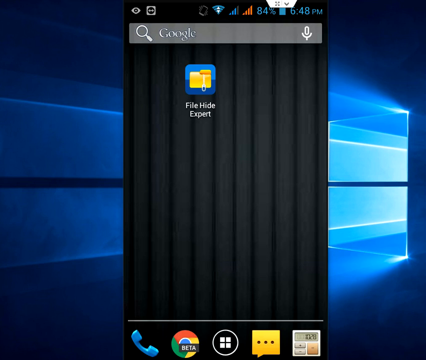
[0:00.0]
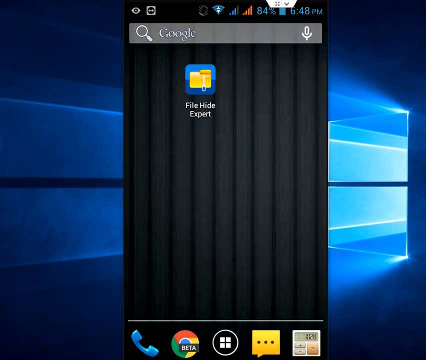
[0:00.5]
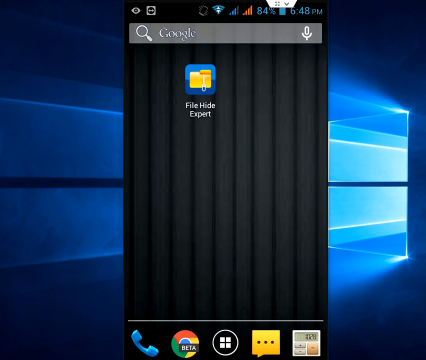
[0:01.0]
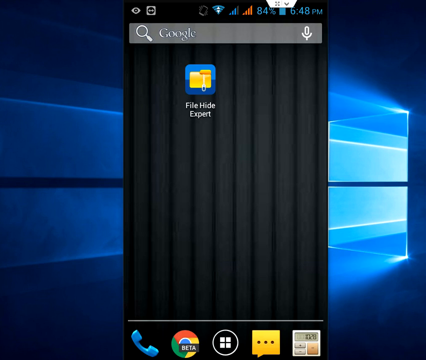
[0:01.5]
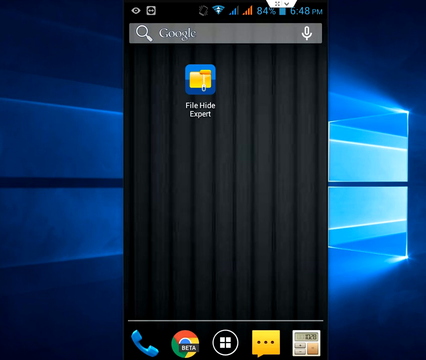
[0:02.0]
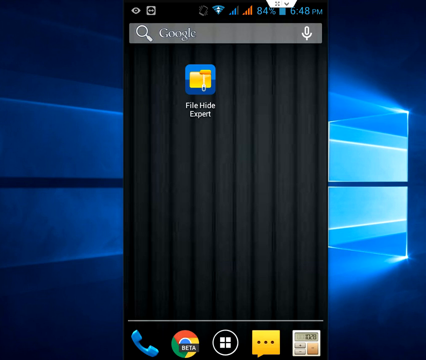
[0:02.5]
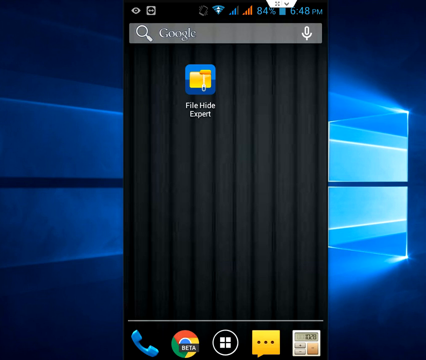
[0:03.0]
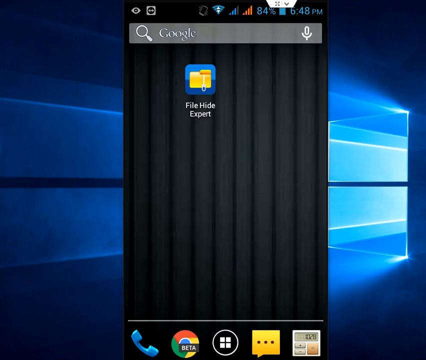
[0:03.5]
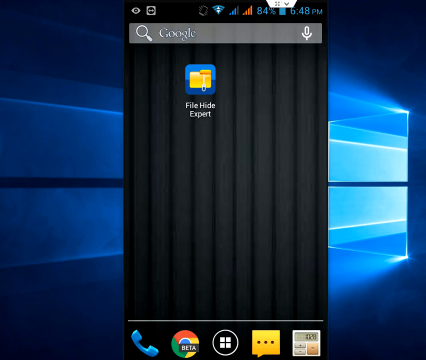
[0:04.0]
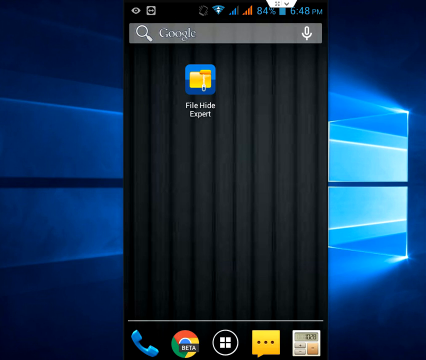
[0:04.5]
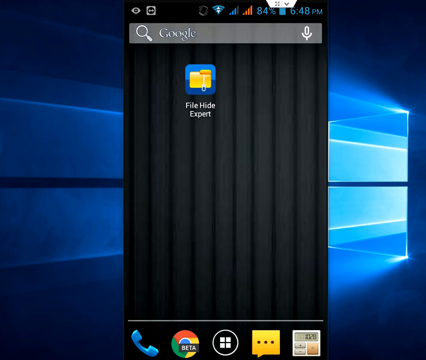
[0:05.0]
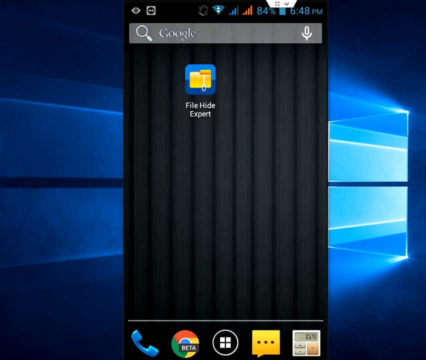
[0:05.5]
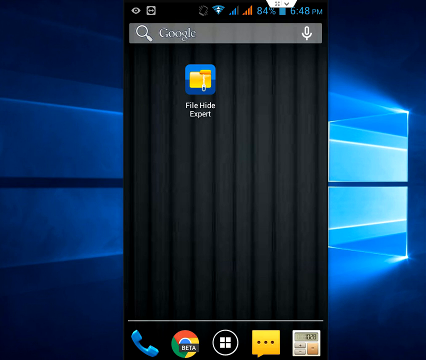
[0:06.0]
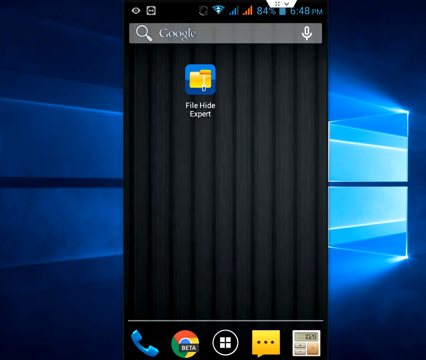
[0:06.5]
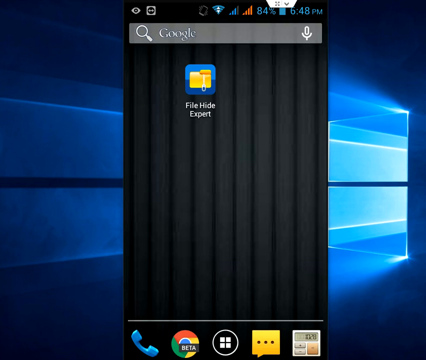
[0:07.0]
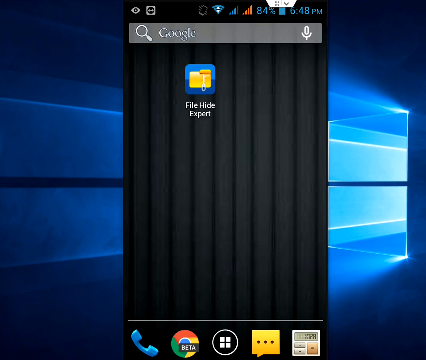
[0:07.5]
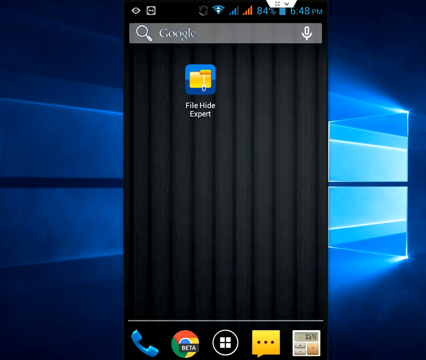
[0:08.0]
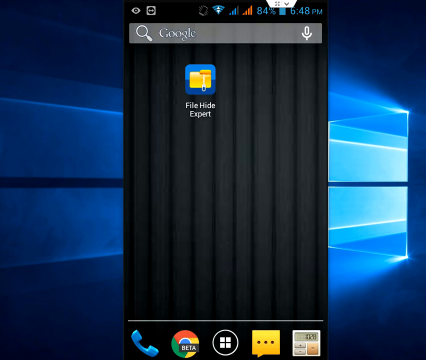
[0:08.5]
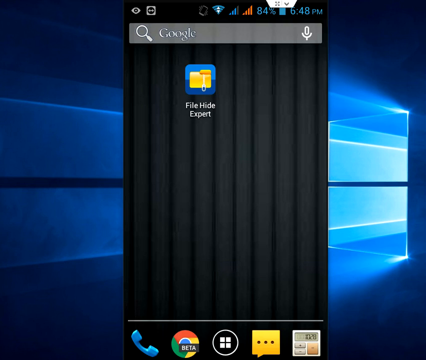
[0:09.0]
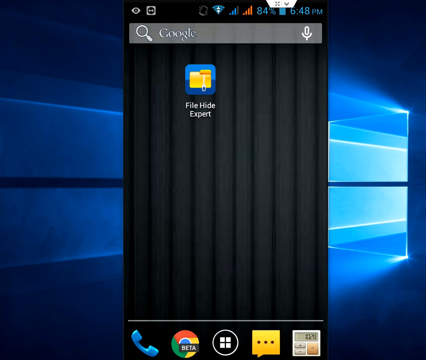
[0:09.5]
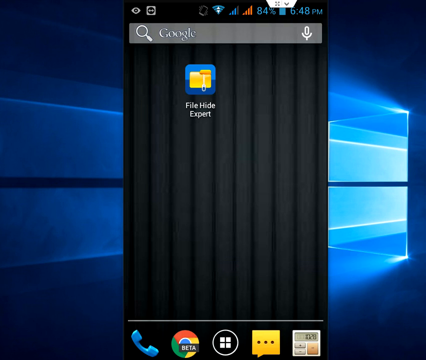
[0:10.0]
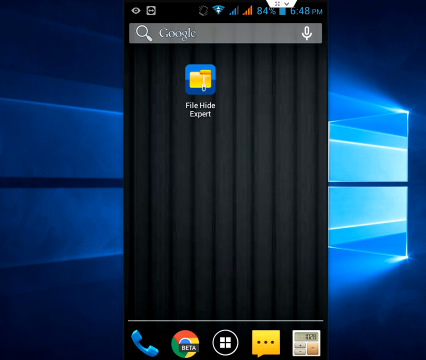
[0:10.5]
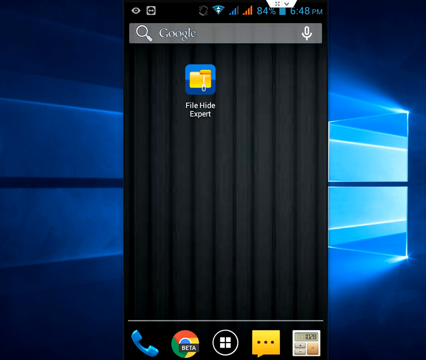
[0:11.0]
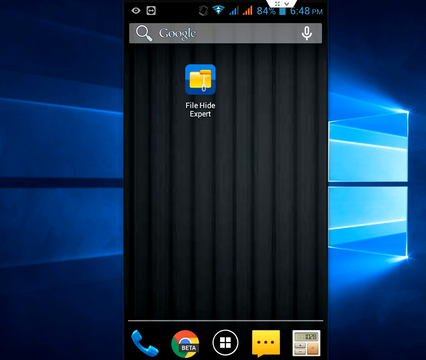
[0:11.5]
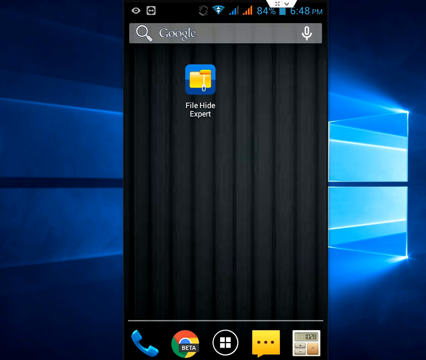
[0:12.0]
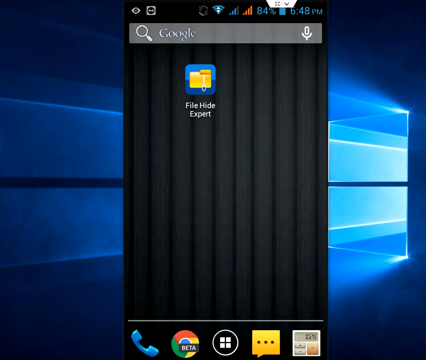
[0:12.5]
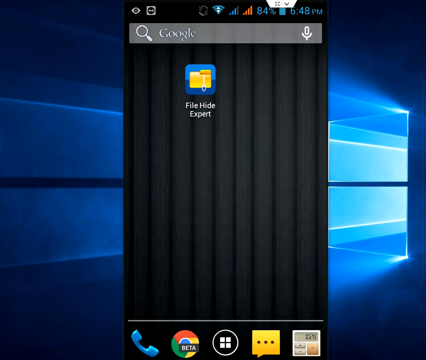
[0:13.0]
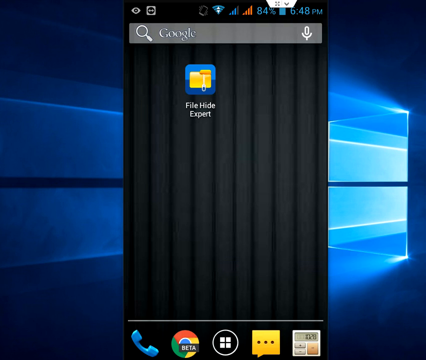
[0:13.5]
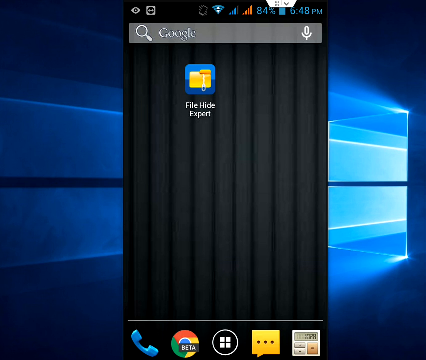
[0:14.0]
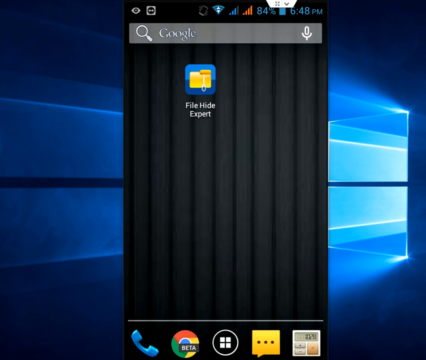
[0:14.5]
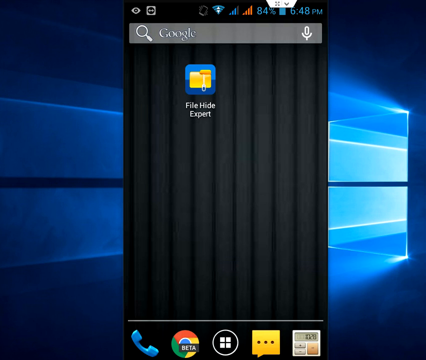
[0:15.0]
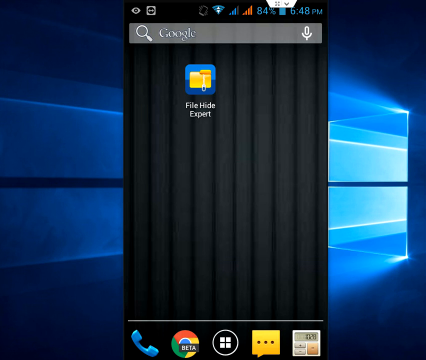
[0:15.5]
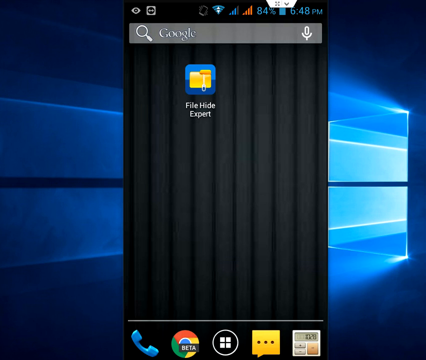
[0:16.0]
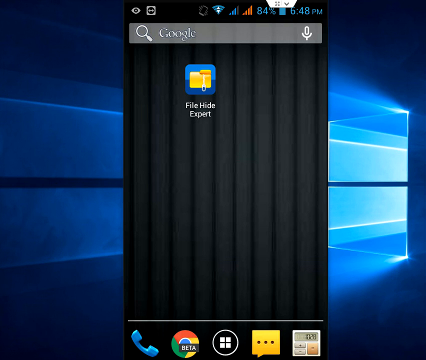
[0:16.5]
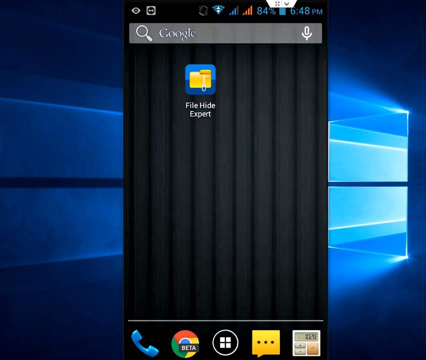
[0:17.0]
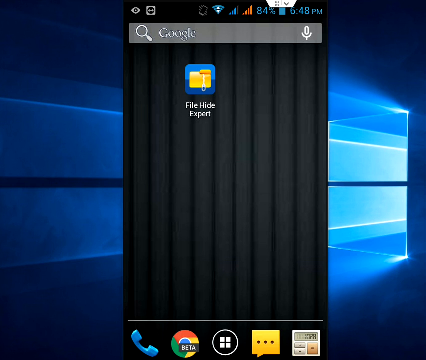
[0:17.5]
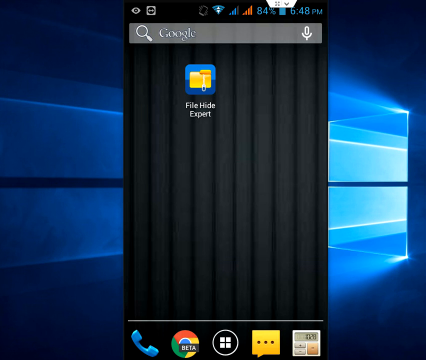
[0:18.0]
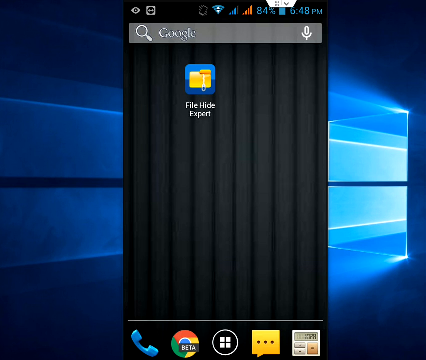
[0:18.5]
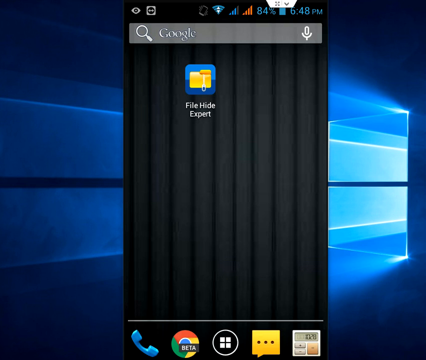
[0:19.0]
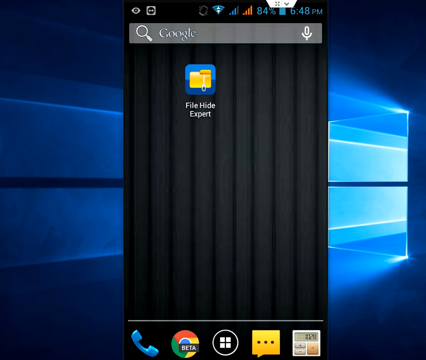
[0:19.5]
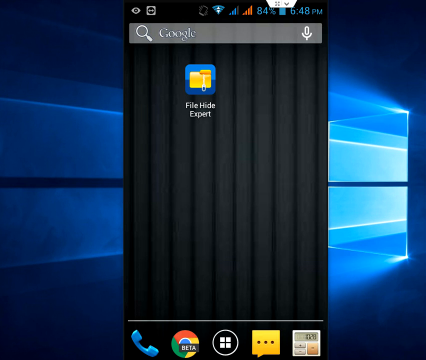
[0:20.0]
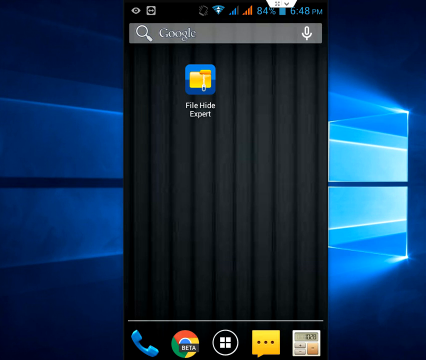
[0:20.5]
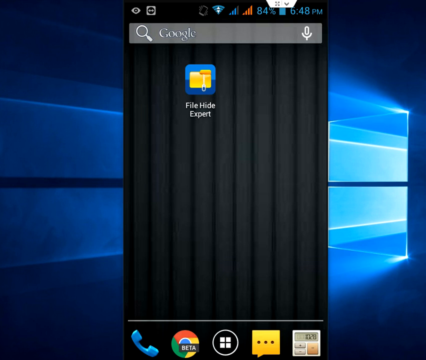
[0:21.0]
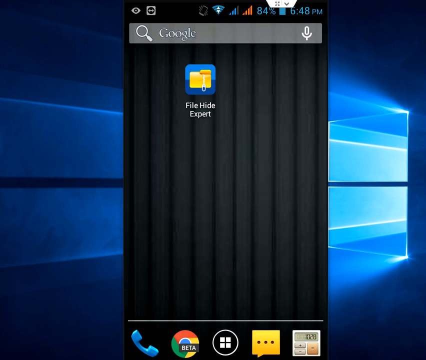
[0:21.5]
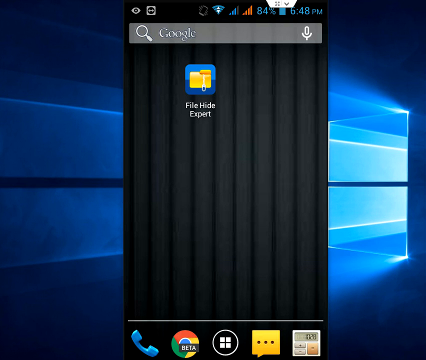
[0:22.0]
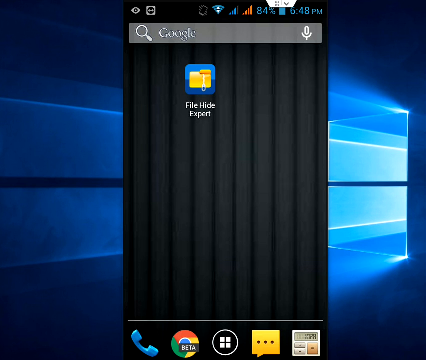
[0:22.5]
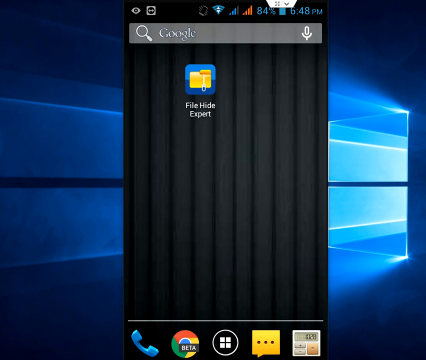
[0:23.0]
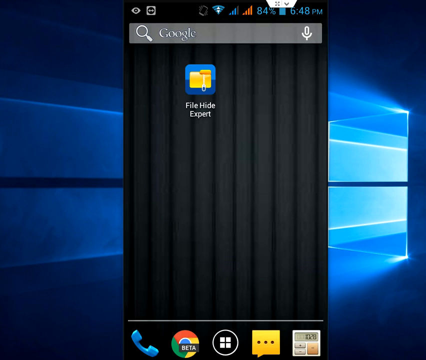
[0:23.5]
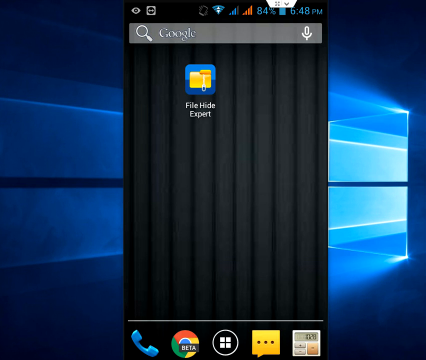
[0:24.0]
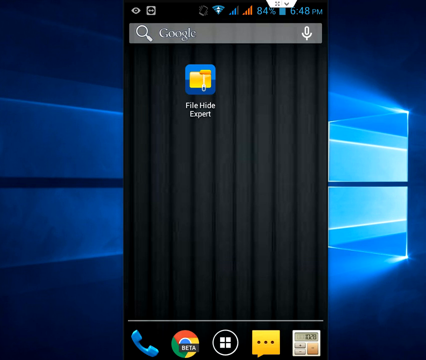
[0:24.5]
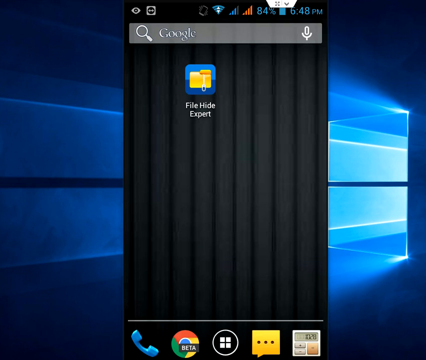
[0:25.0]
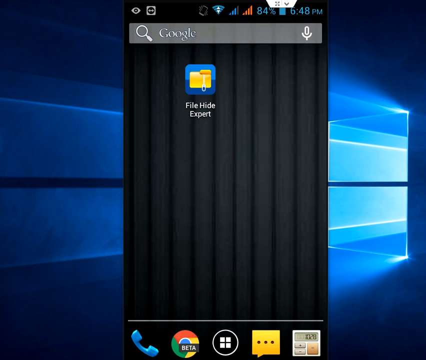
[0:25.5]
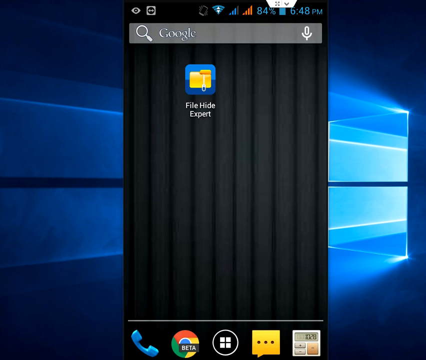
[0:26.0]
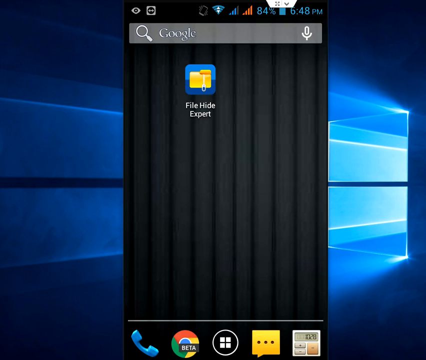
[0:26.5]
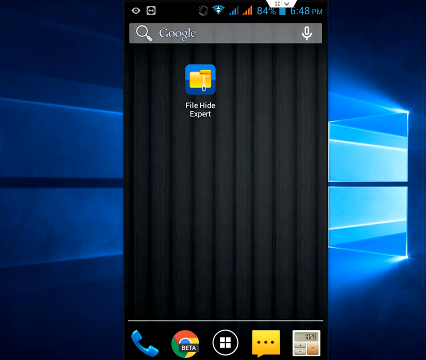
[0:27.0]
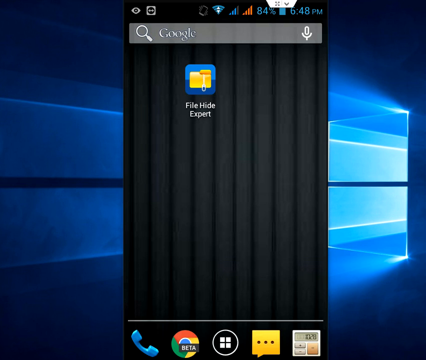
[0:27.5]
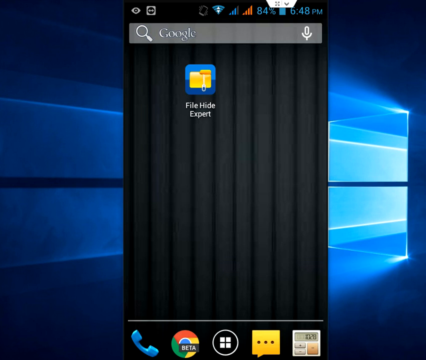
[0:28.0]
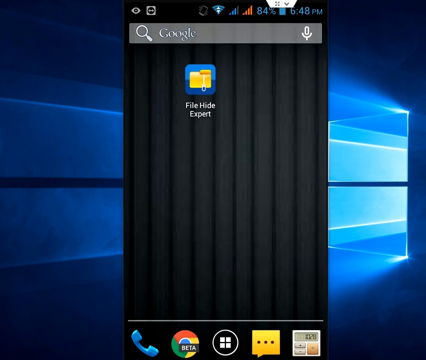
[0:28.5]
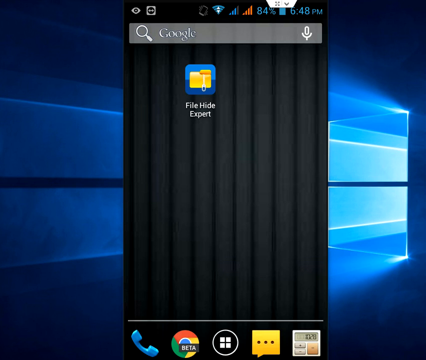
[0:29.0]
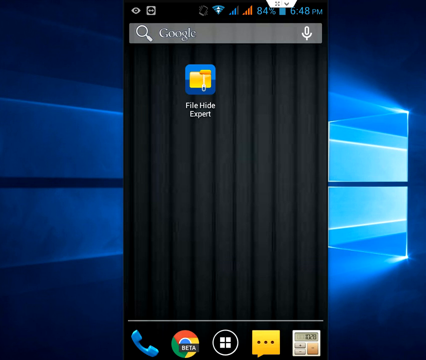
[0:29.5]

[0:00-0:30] A static image of a phone screencast is overlaid on a blue Windows computer background. The screenshot from the mobile device is vertical and centered on the screen. The phone has a grey Google search bar at the top, and the wallpaper below is black with various vertical dividers, almost like thin black strips. There is only one icon on the screen, toward the top and a little left of center: a blue icon with a yellow file, with the words "File Hide Expert" below it in white. Along the bottom of the phone screen are five icons, from left to right: a blue phone icon, a Chrome beta icon, a menu icon, a yellow quote box icon, and one that looks like a newspaper.